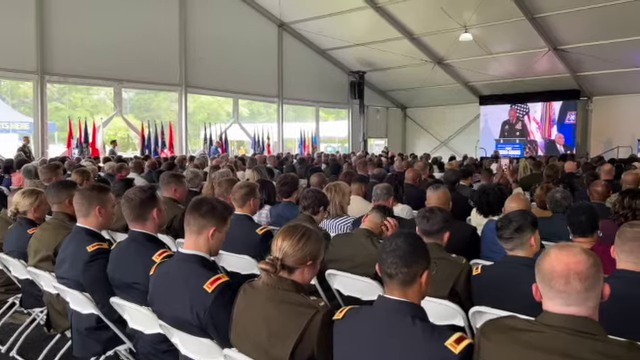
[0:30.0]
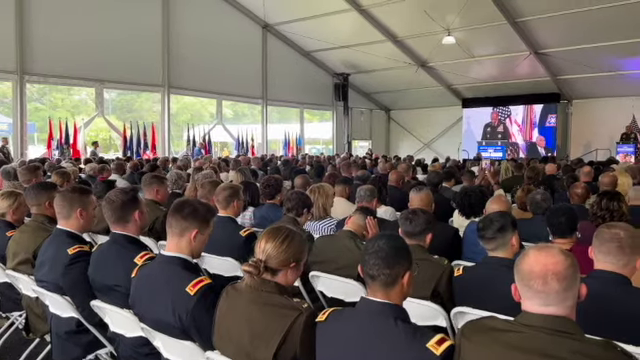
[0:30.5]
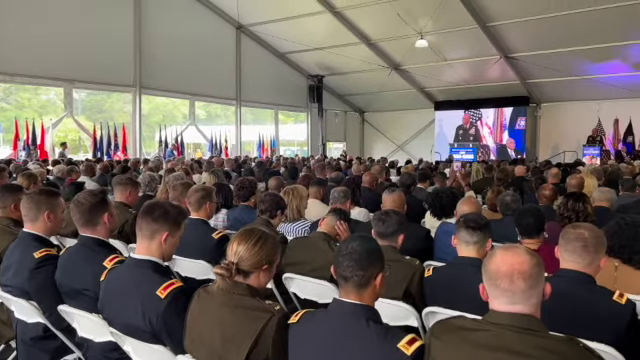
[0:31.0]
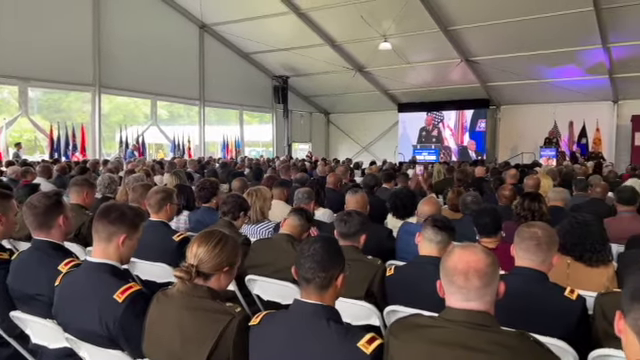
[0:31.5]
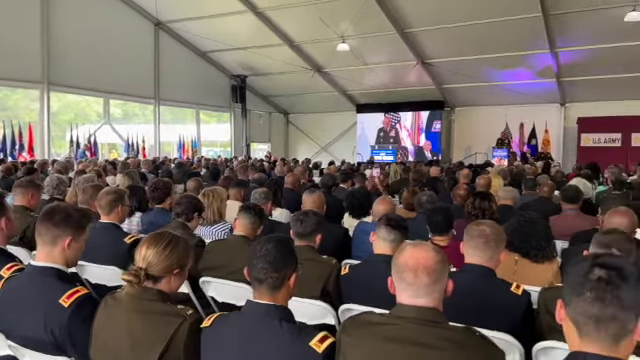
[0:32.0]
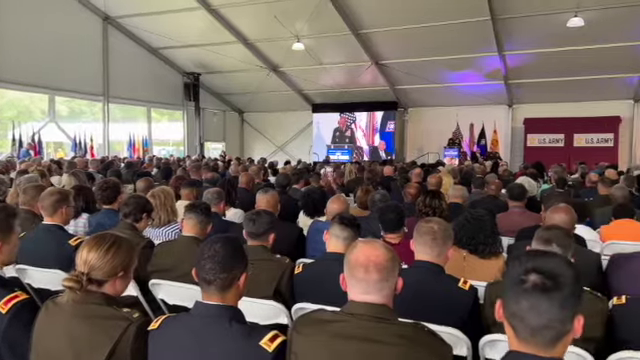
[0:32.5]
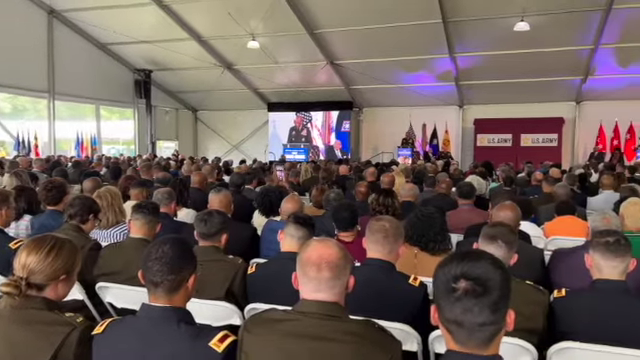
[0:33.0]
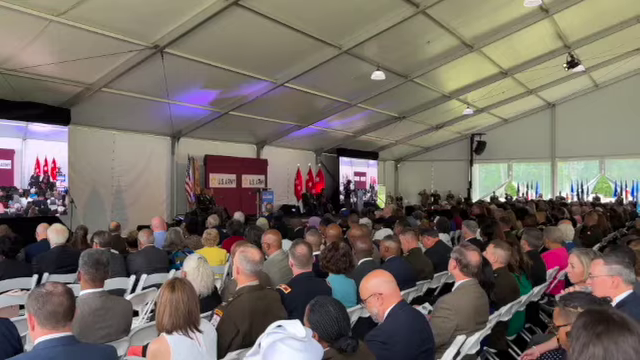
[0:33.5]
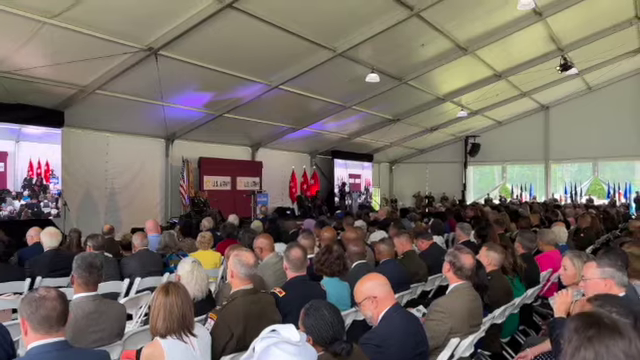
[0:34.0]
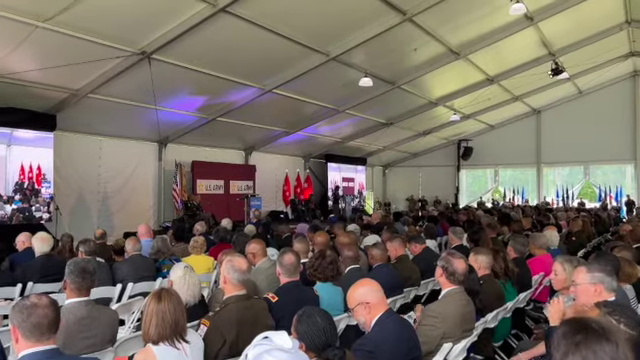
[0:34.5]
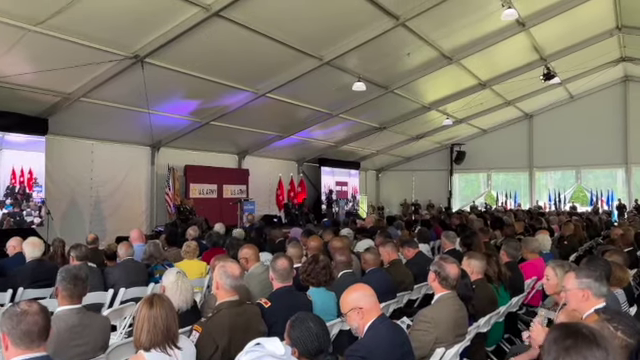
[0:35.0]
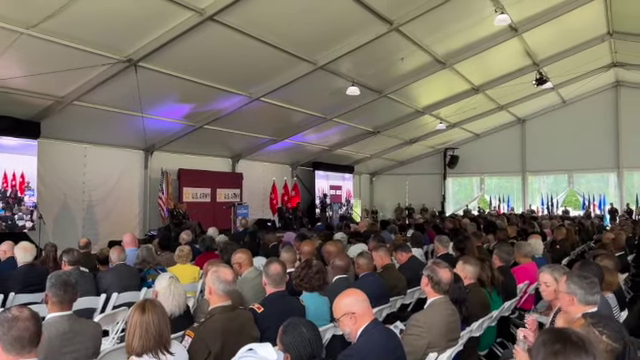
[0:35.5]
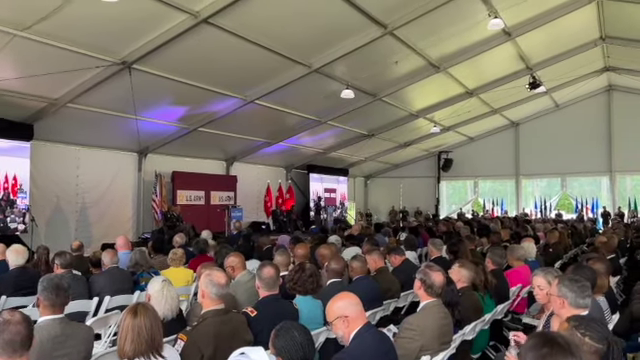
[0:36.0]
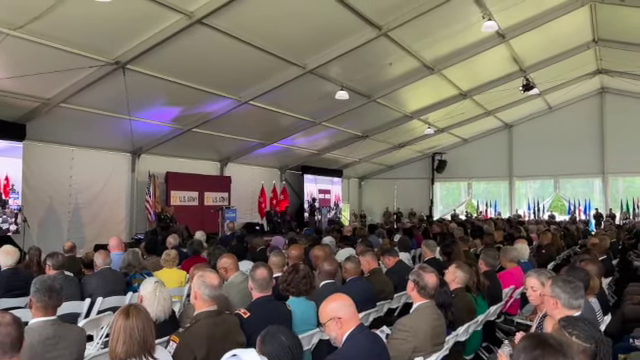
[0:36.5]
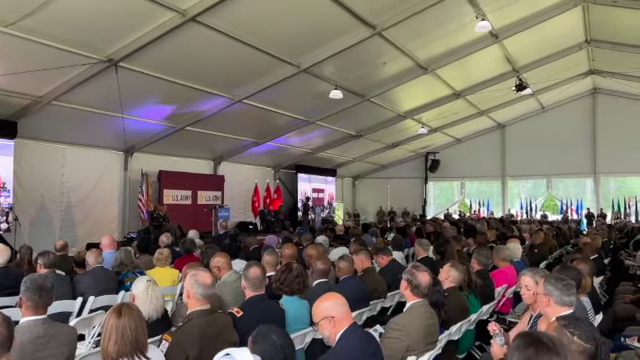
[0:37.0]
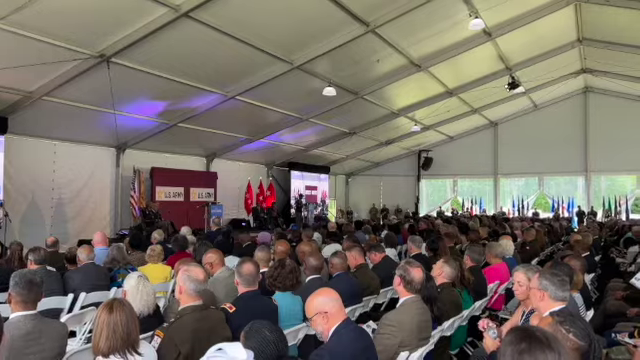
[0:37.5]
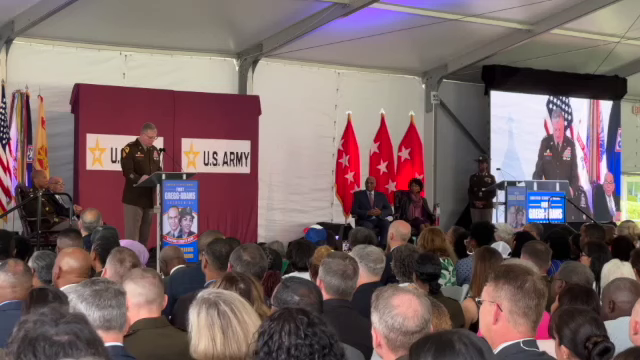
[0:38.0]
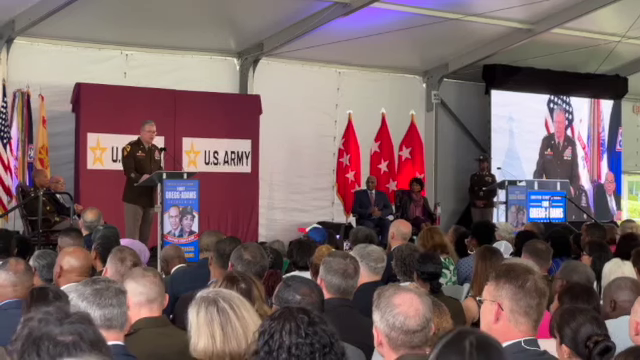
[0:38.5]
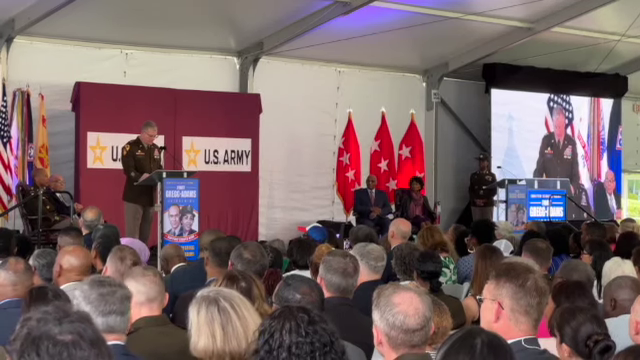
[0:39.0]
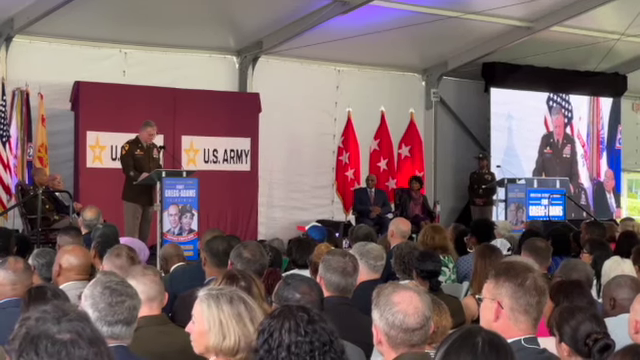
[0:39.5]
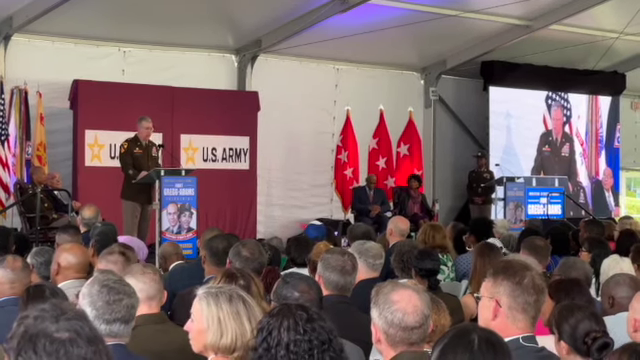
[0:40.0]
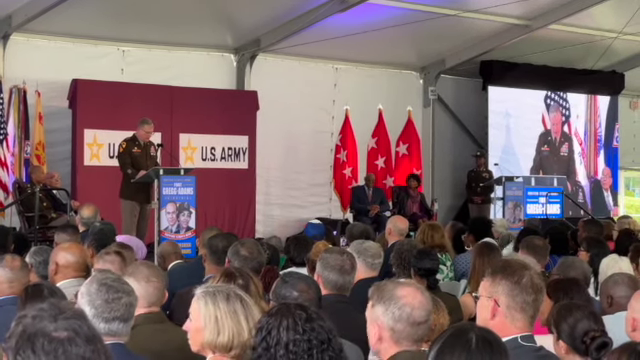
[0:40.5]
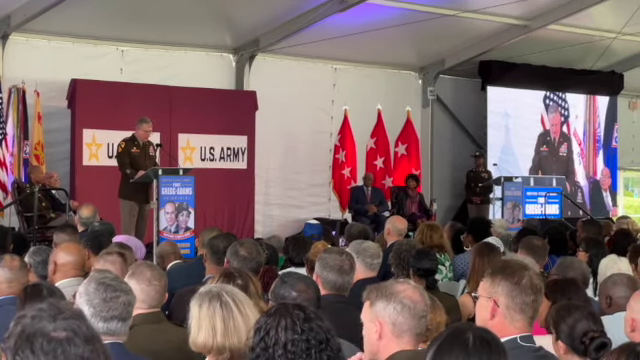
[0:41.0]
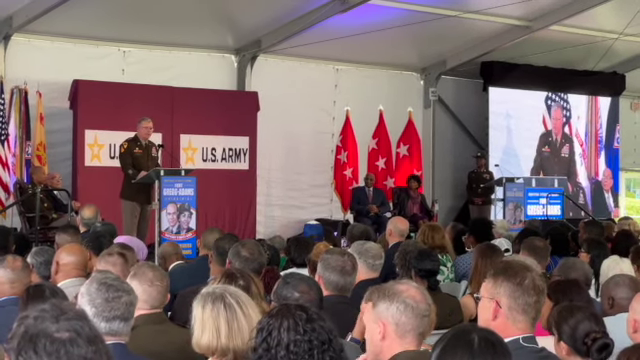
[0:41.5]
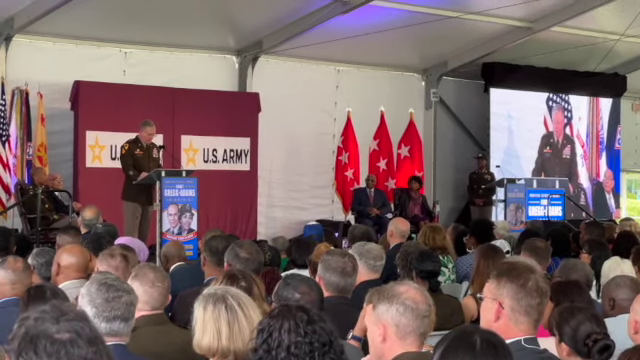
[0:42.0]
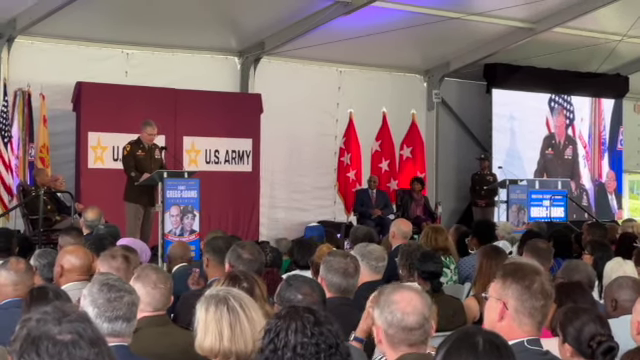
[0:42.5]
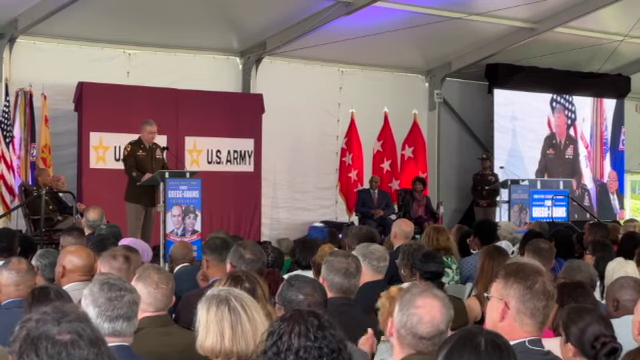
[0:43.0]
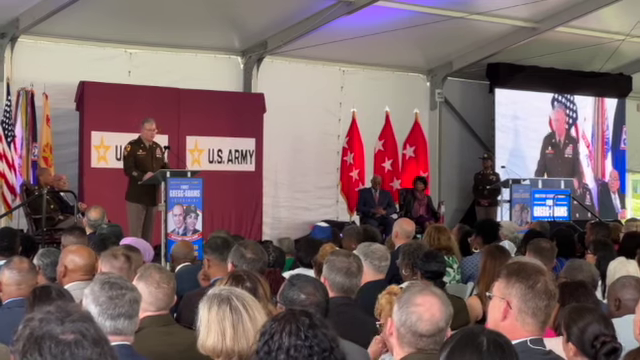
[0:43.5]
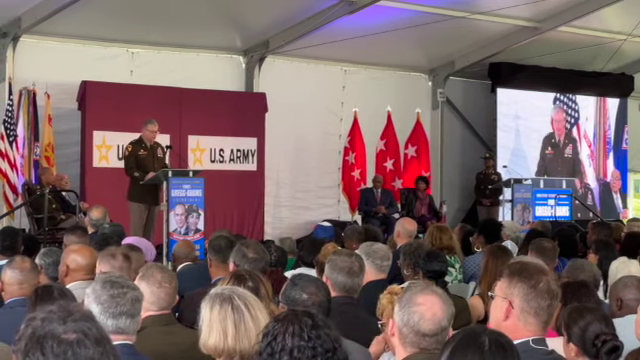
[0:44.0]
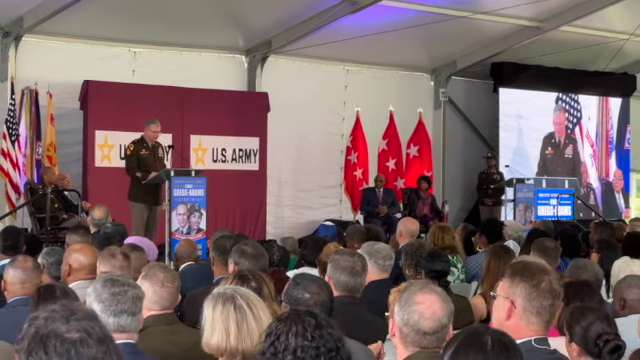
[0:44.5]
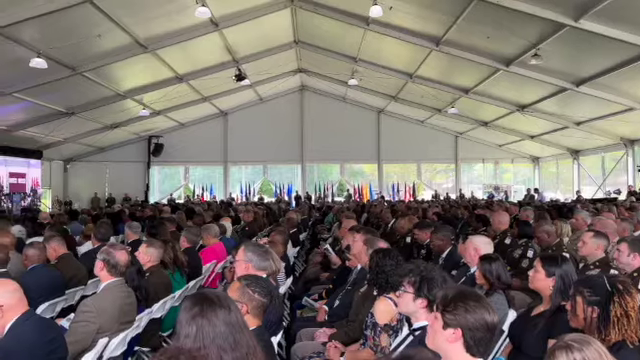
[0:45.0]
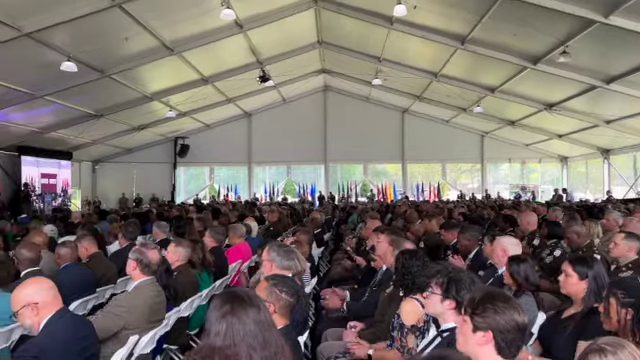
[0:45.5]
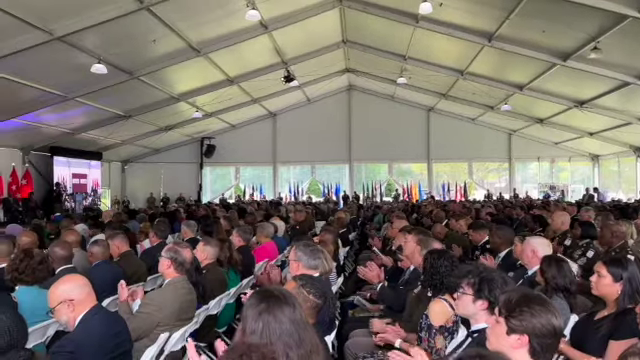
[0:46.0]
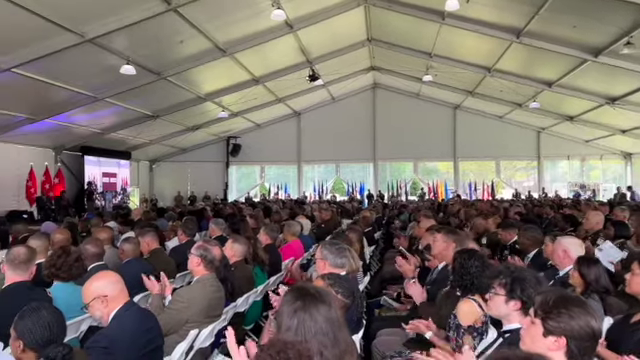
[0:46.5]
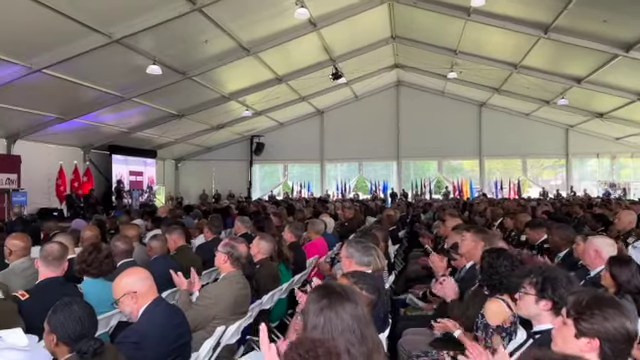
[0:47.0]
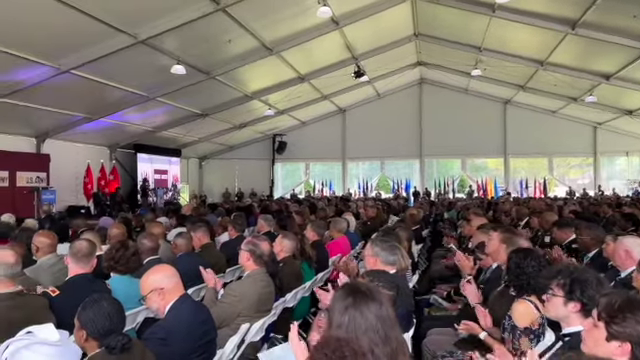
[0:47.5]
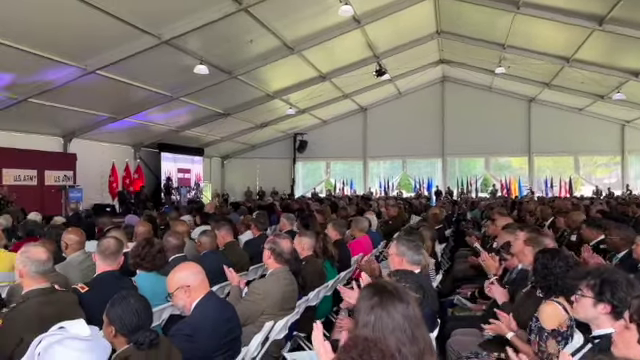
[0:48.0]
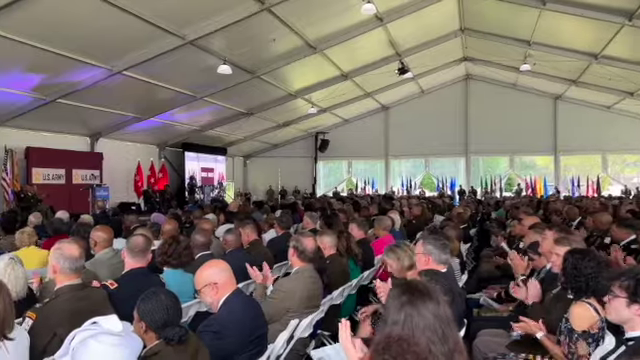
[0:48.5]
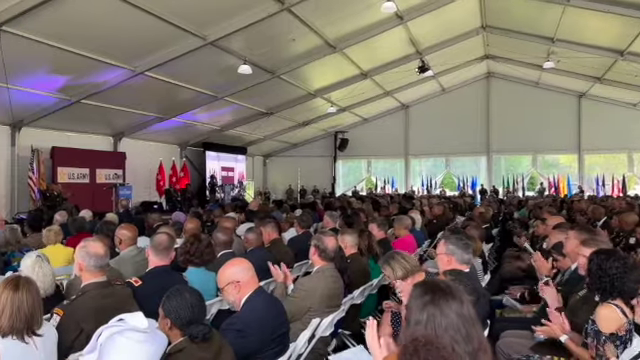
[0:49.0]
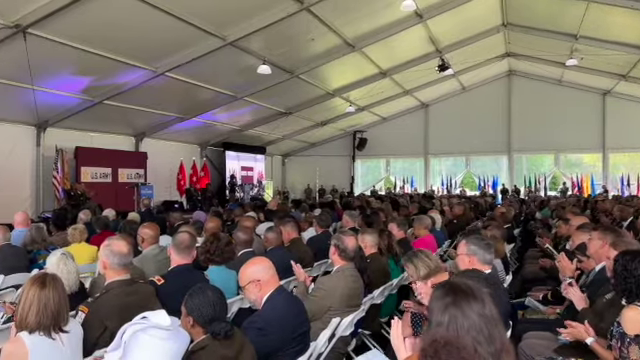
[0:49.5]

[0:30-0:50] More of the audience and the presentation are shown, apparently a U.S. Army presentation. A sign on the podium where a man is talking indicates that it is in Virginia. Many people in the audience watch the live presentation, which leads into a video presentation, probably from another post somewhere in the United States. In the video, the man talking stands in front of a U.S. flag. The audience includes men and women in dress blues or dress greens, along with what look to be spouses or family members. Closer to the podium there seem to be more non-military people in the chairs. The event takes place in a big white metal building that may be a hangar, perhaps at a base. Several small flags are against the windows, probably for use on a podium. It seems to be day outside.